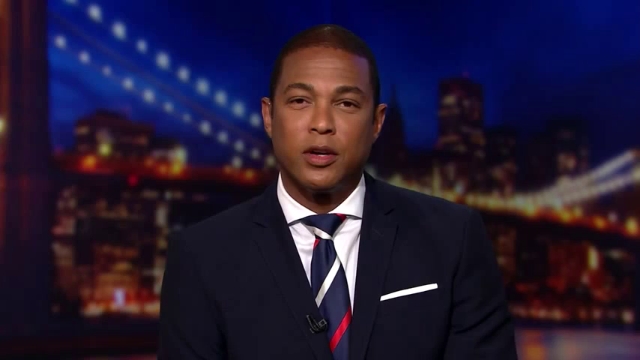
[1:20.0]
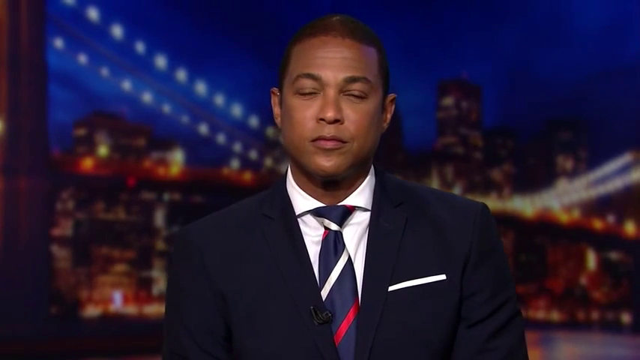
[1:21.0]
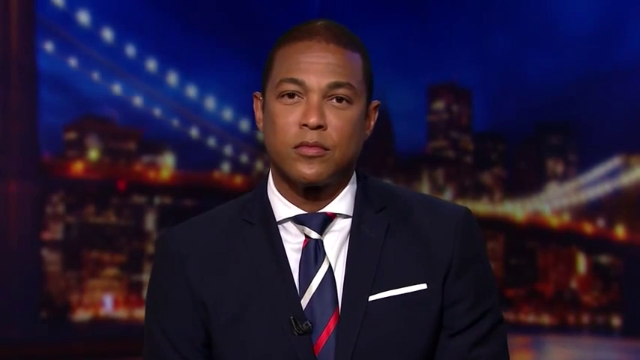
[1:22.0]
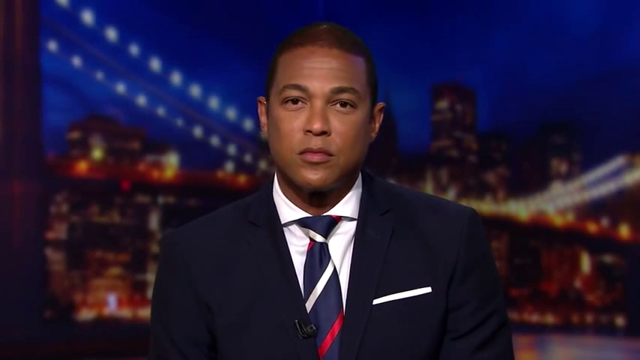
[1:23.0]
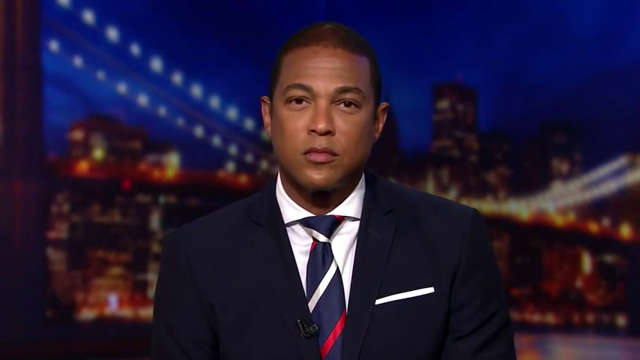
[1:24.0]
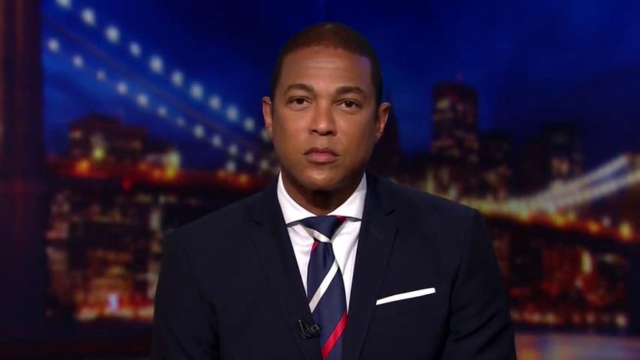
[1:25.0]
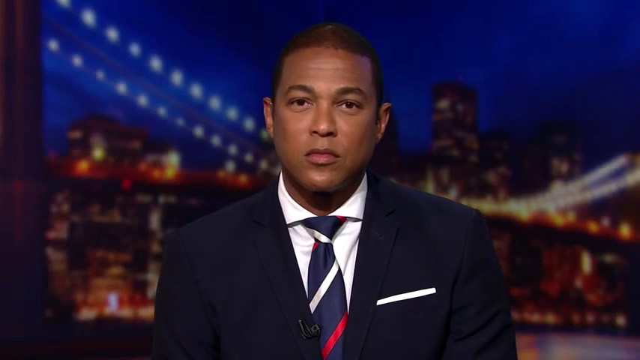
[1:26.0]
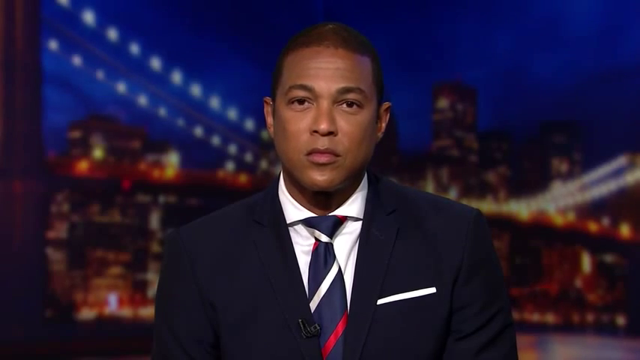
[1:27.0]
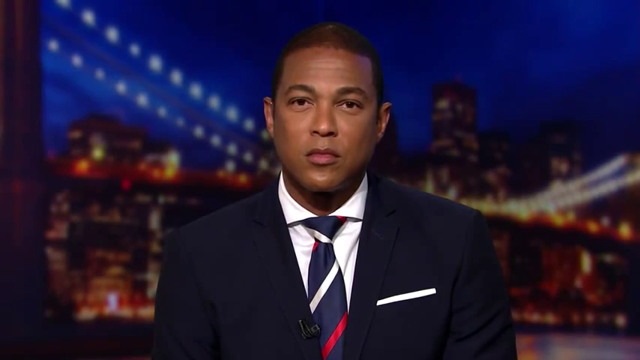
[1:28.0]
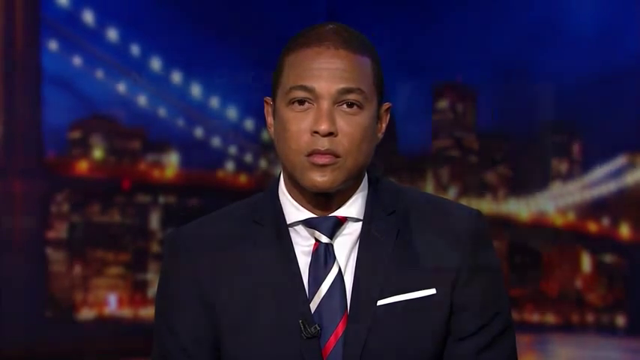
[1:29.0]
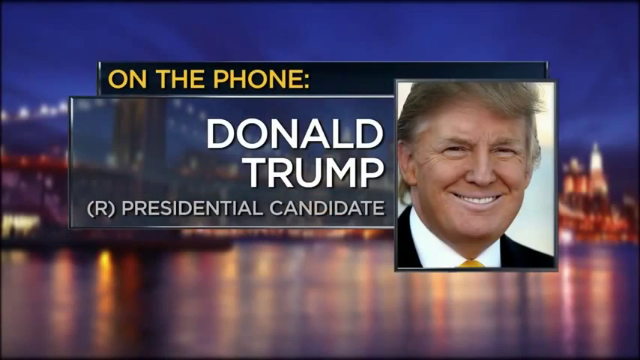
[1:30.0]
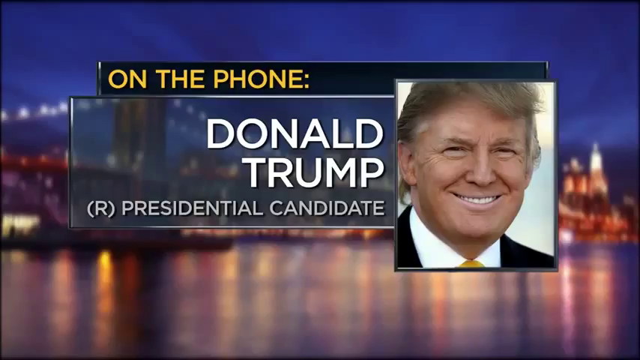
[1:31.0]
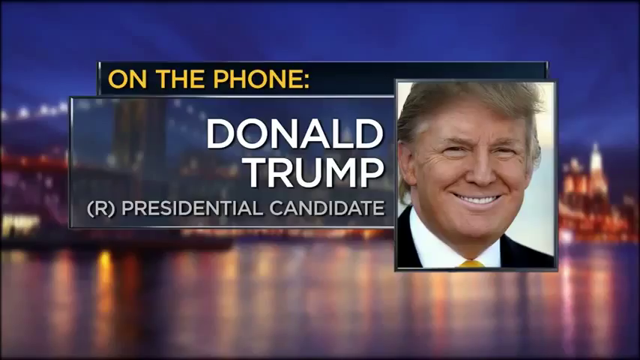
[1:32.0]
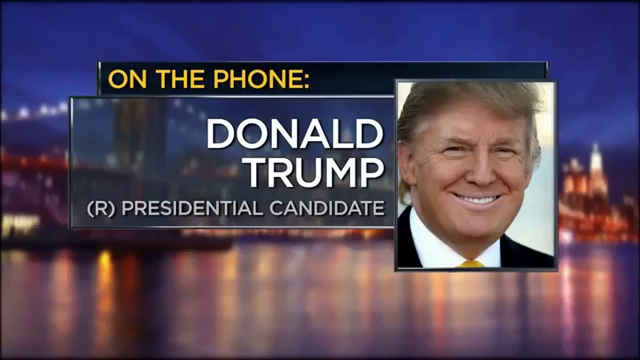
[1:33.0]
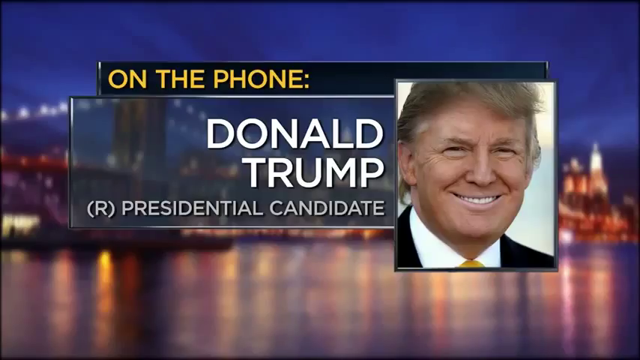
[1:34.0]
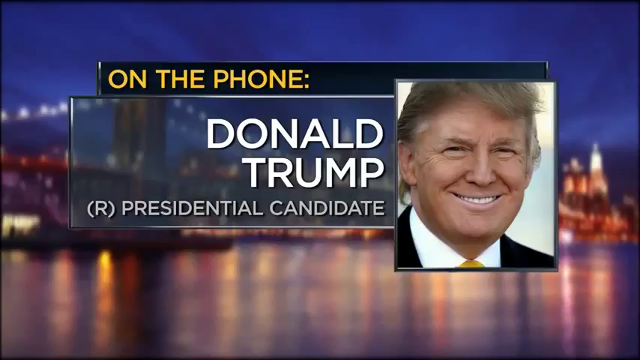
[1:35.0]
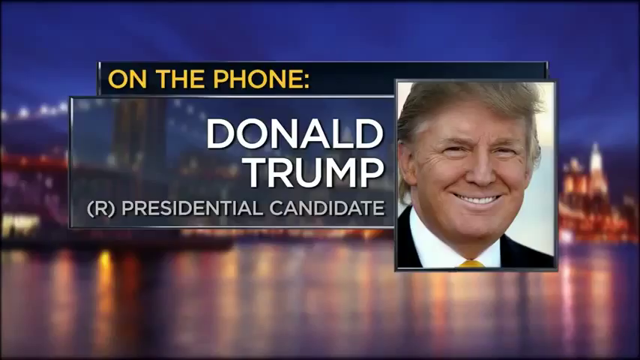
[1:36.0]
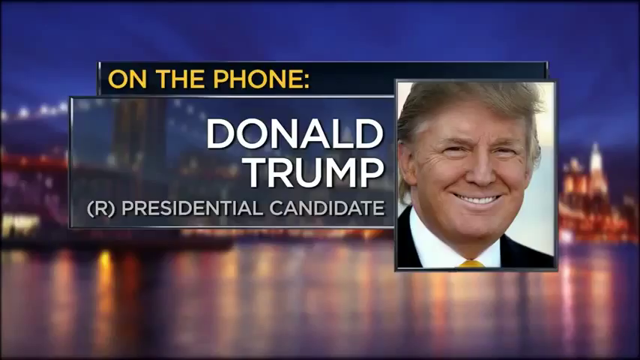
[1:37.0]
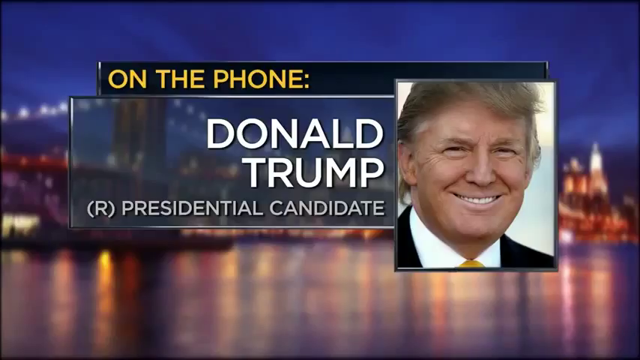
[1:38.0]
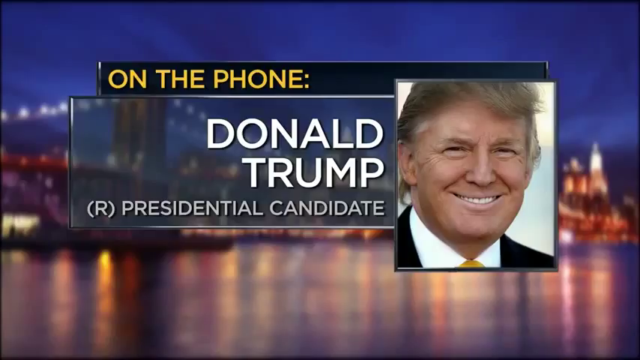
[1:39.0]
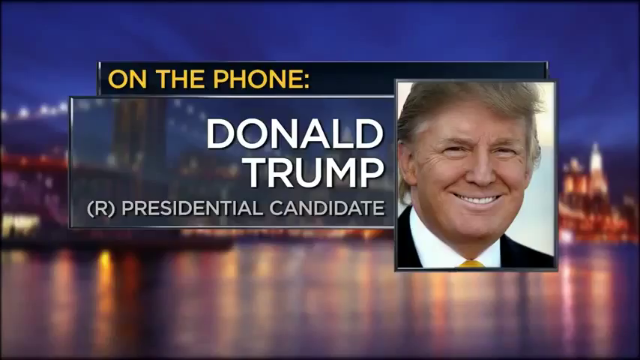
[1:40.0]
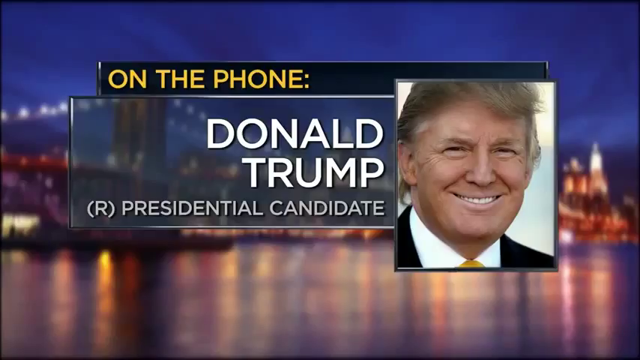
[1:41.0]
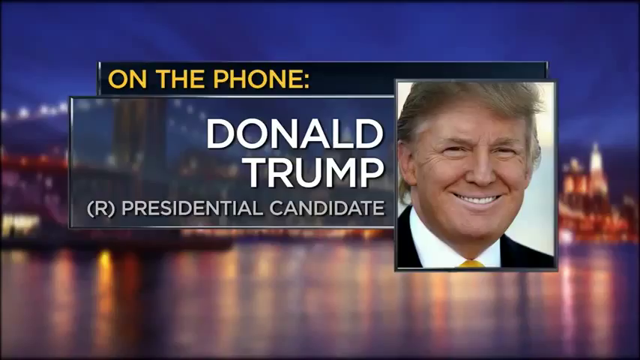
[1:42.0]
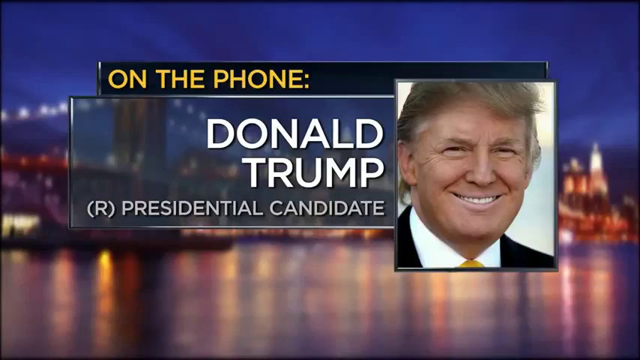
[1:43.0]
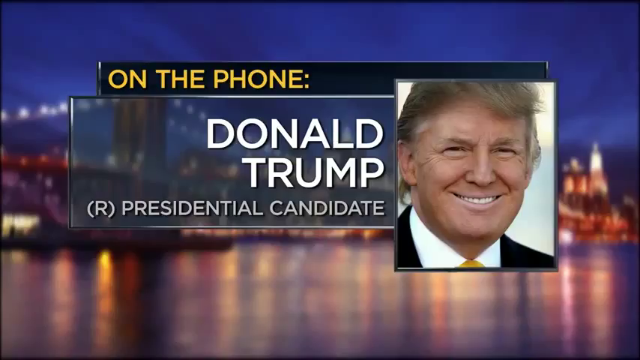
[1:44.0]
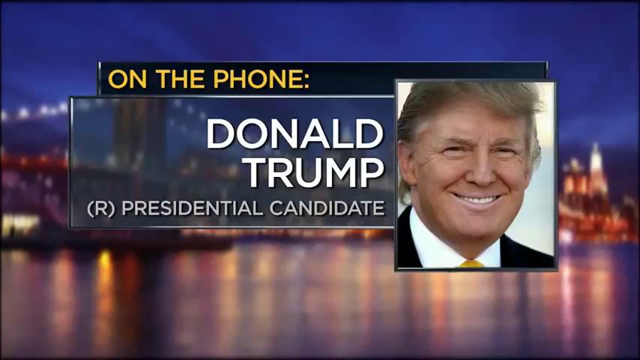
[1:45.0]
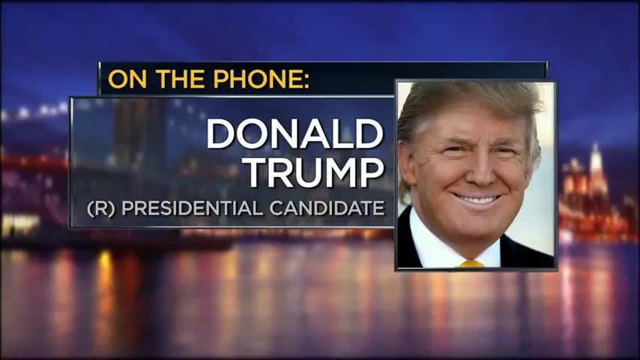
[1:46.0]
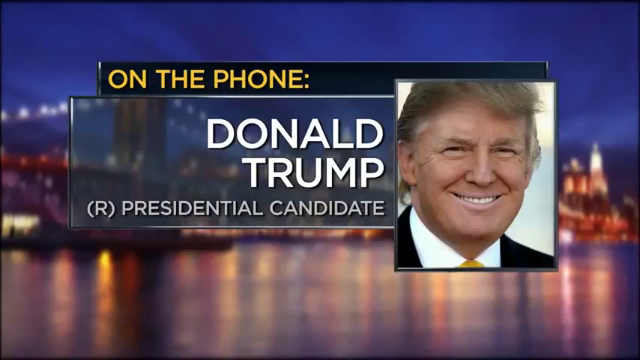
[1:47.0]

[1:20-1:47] The news anchor sits up straighter for a moment, nodding subtly, and then the "on the phone" screen with Donald Trump appears again. The anchor is seen mostly reacting subtly rather than speaking, nodding and appearing to listen very intently.